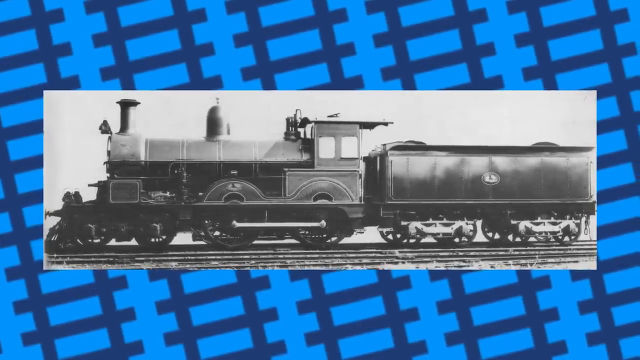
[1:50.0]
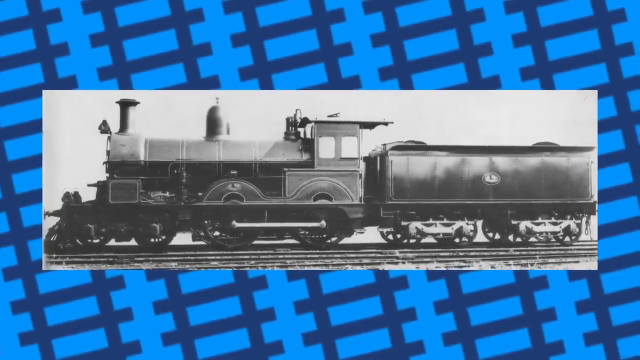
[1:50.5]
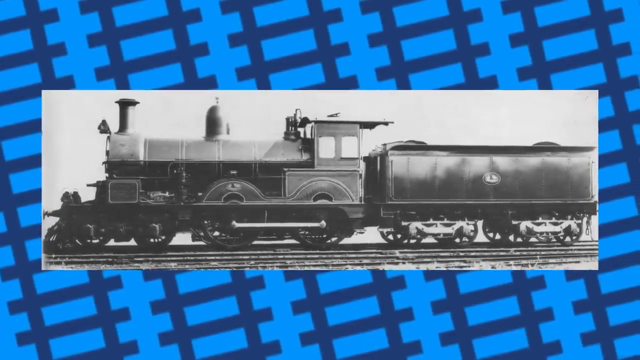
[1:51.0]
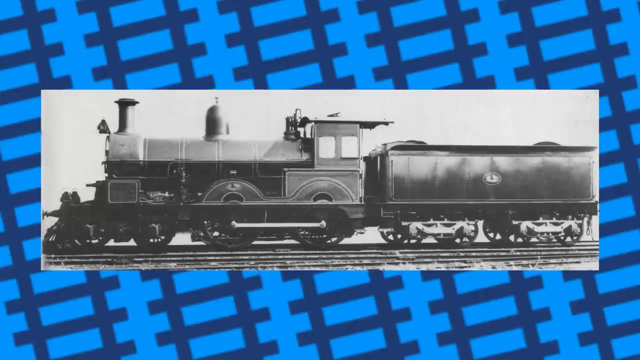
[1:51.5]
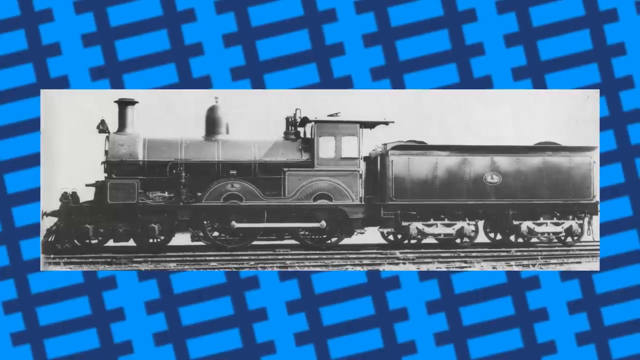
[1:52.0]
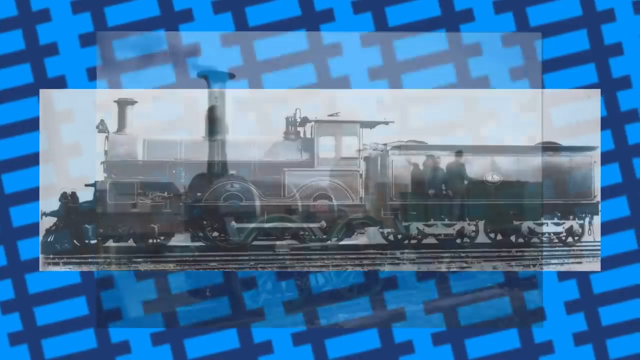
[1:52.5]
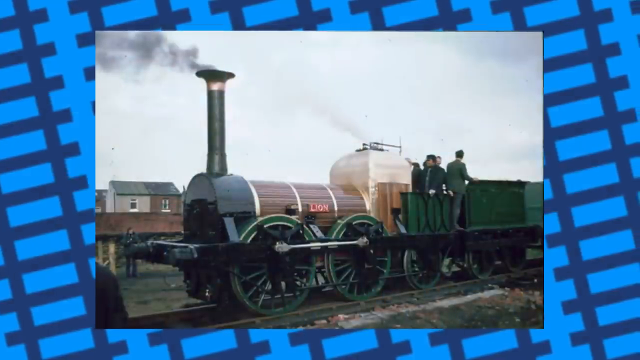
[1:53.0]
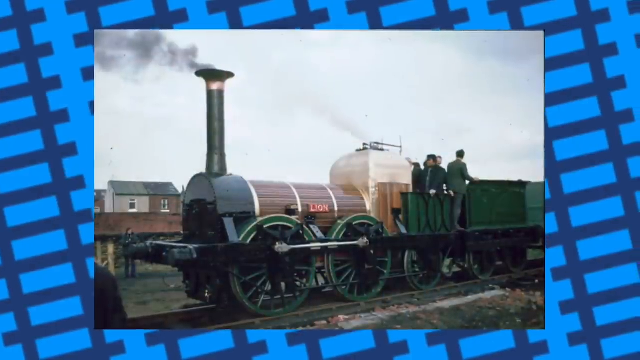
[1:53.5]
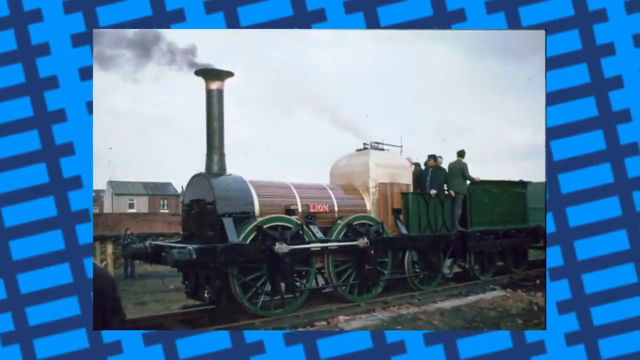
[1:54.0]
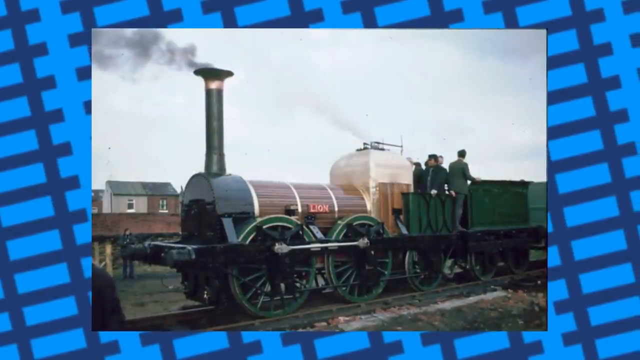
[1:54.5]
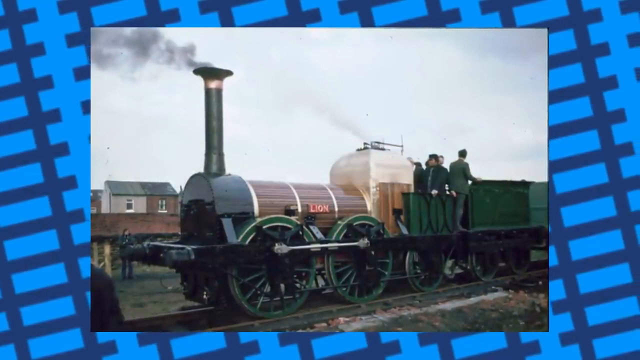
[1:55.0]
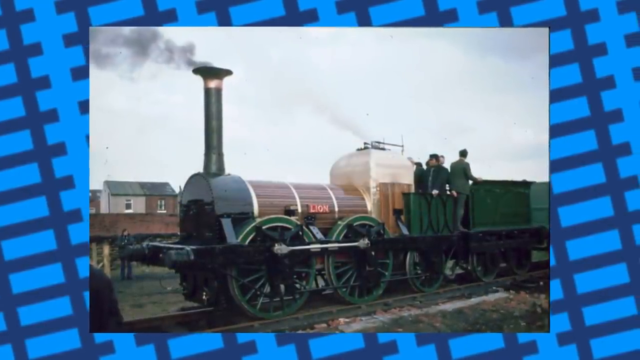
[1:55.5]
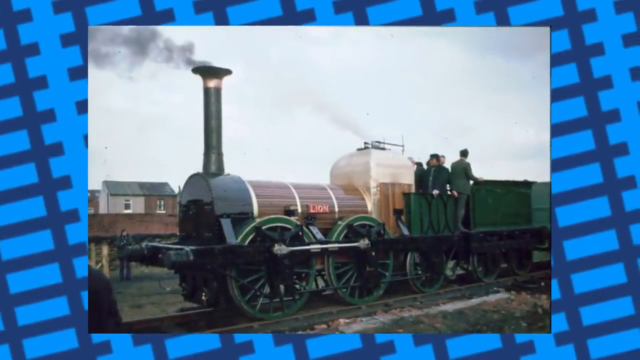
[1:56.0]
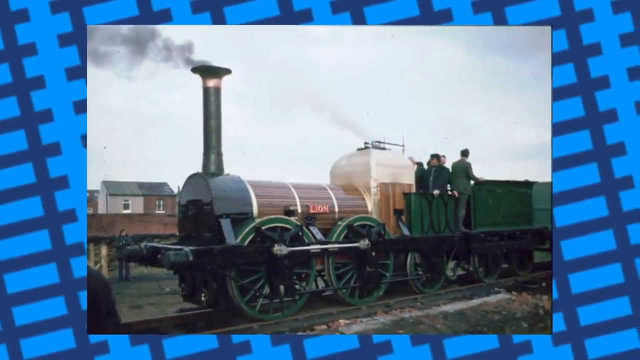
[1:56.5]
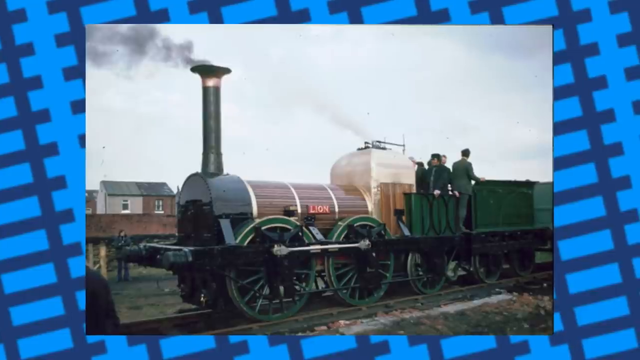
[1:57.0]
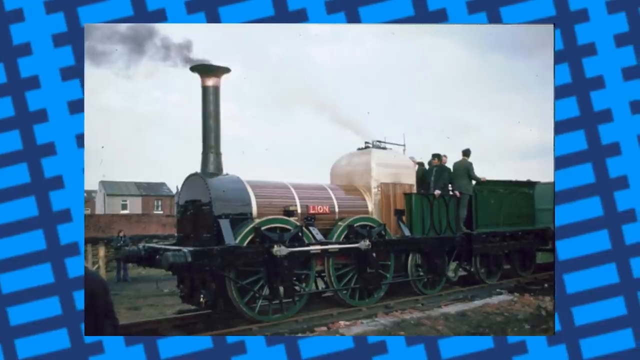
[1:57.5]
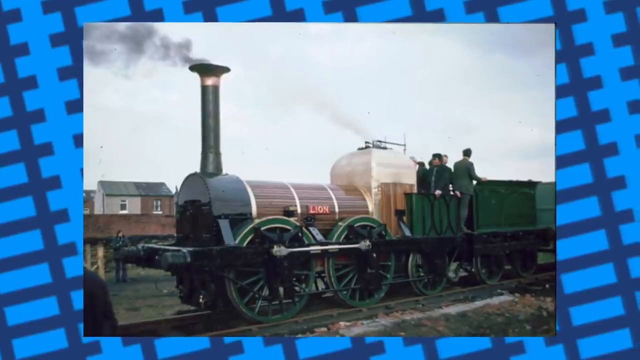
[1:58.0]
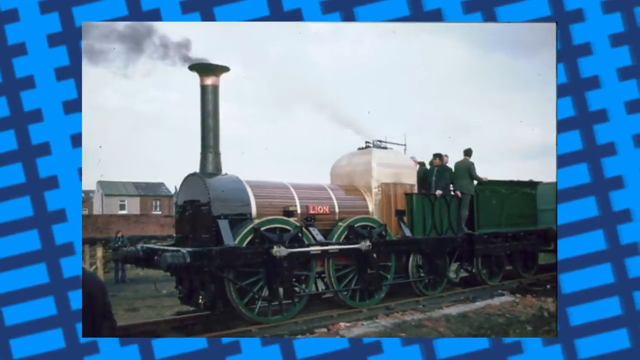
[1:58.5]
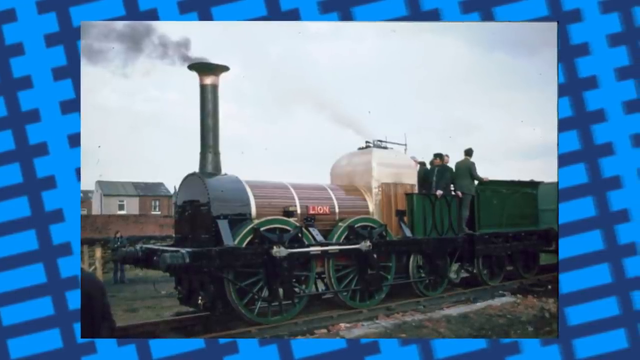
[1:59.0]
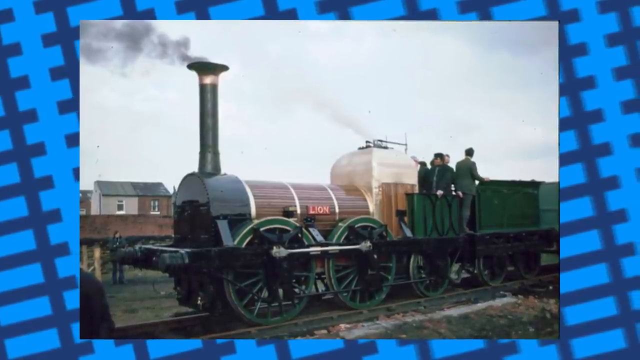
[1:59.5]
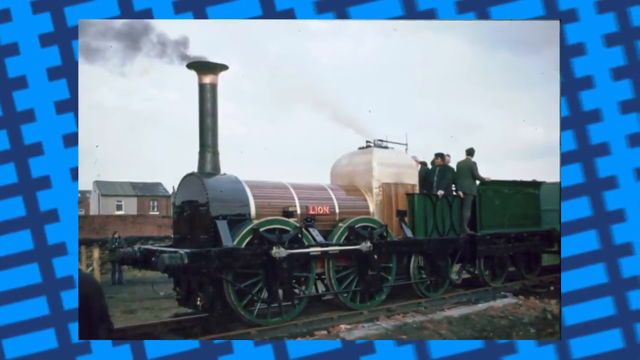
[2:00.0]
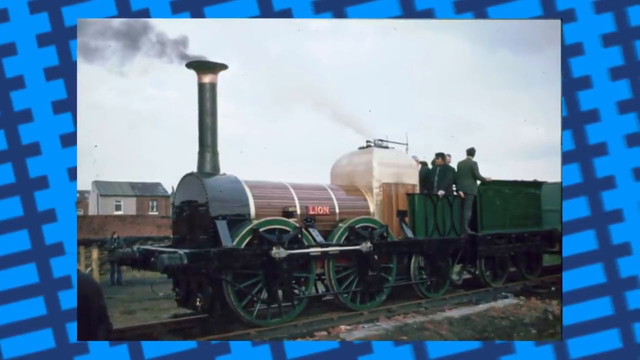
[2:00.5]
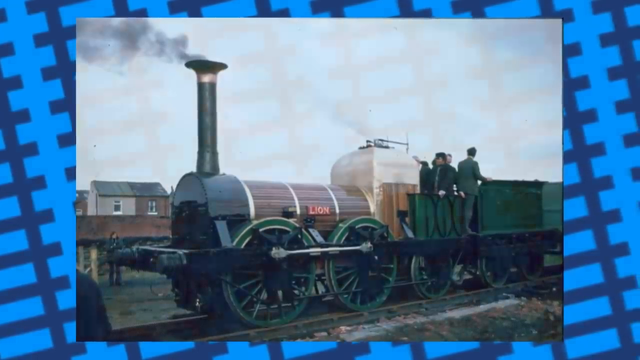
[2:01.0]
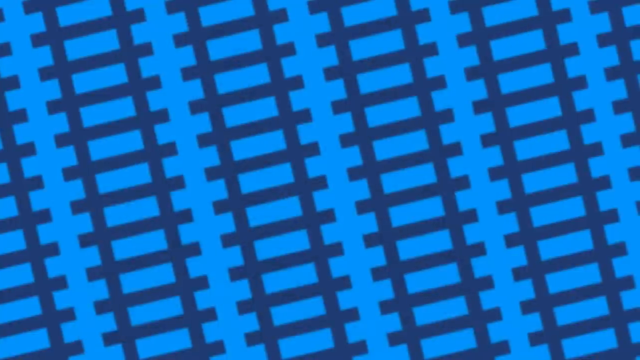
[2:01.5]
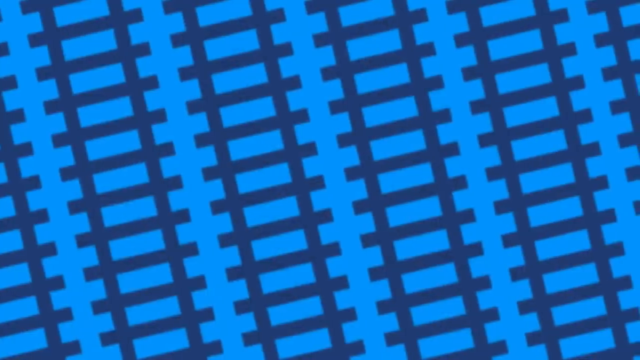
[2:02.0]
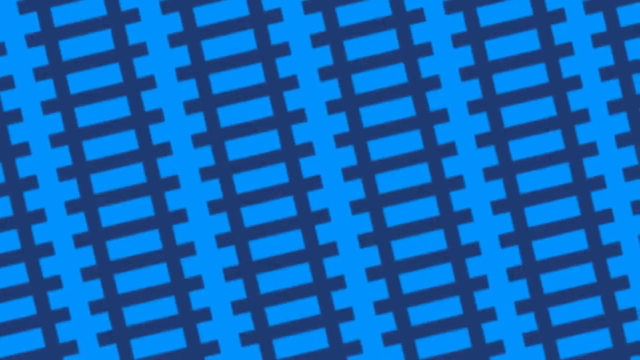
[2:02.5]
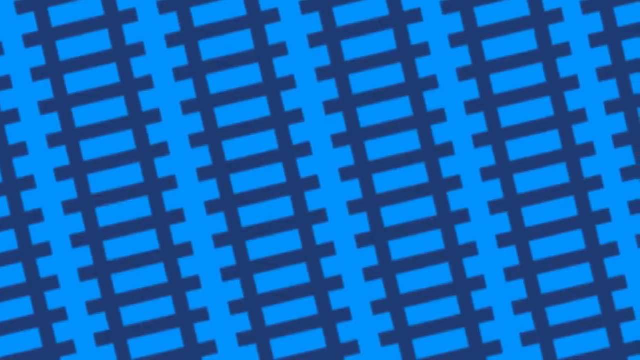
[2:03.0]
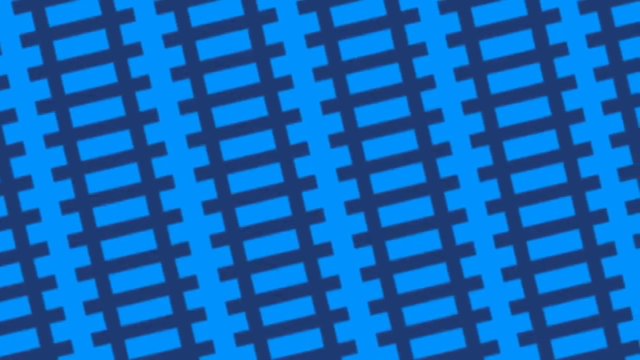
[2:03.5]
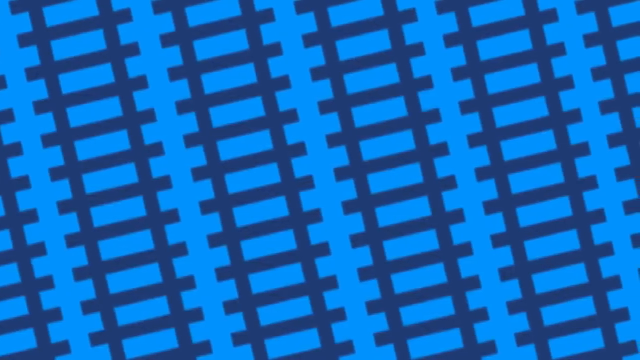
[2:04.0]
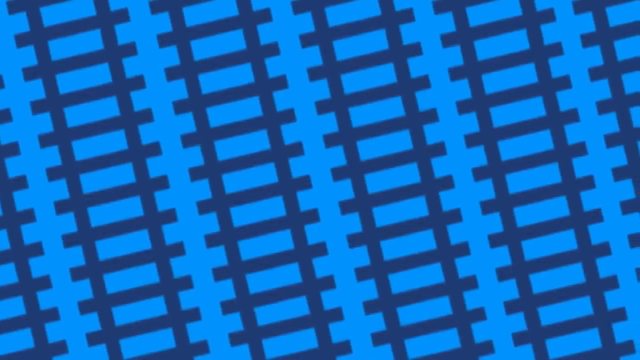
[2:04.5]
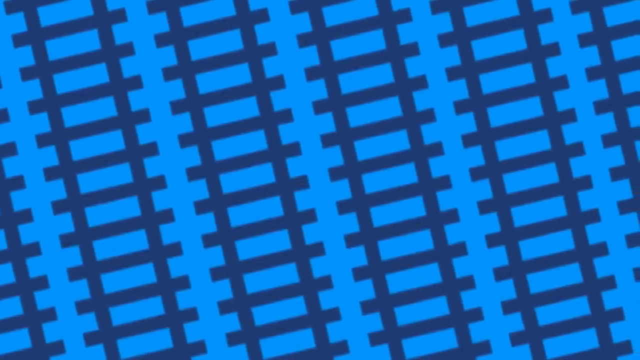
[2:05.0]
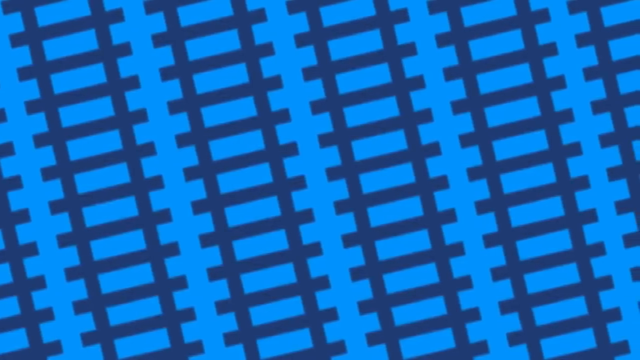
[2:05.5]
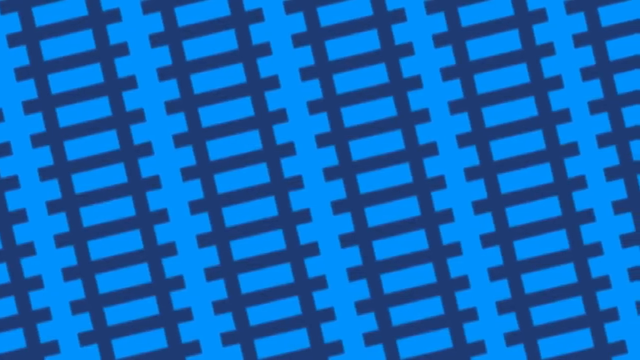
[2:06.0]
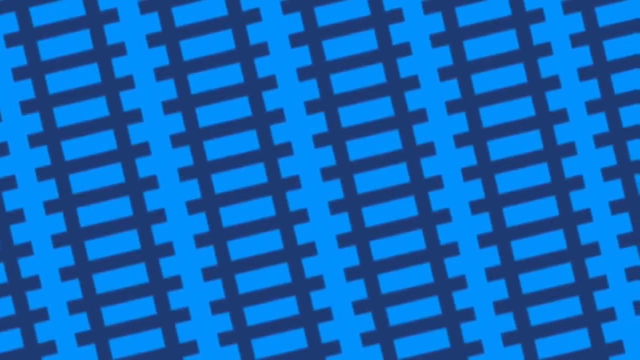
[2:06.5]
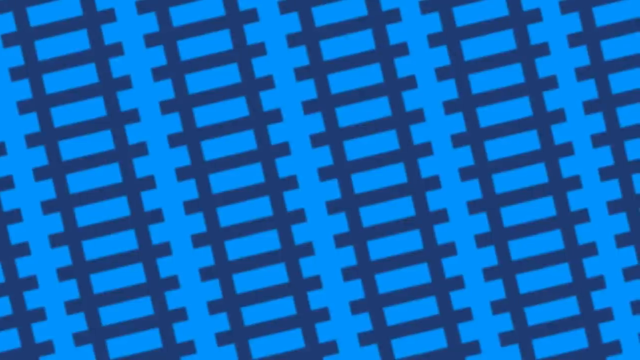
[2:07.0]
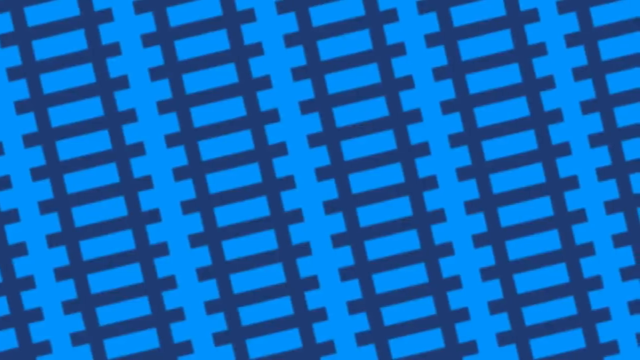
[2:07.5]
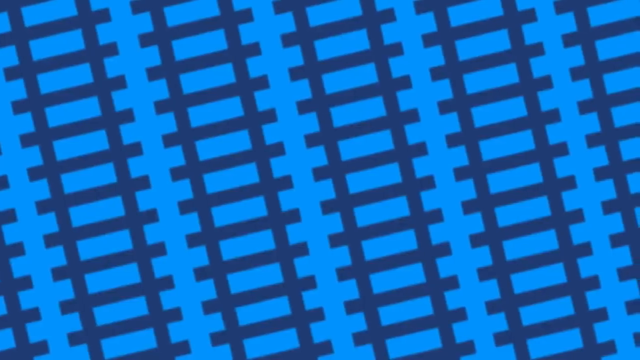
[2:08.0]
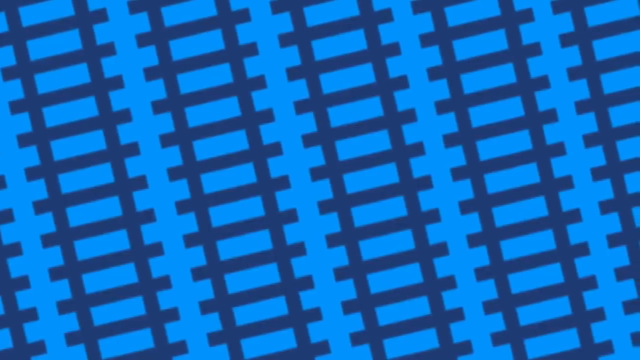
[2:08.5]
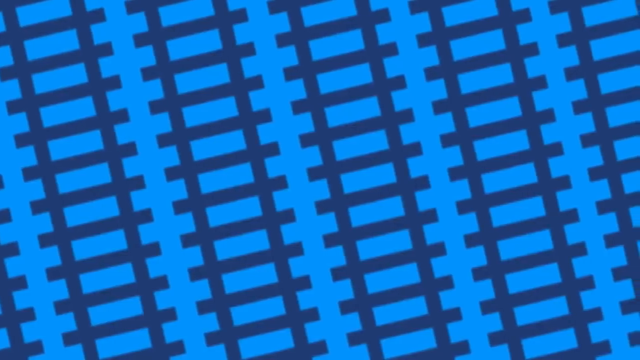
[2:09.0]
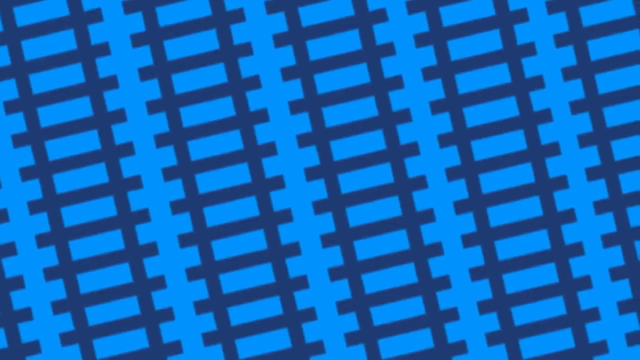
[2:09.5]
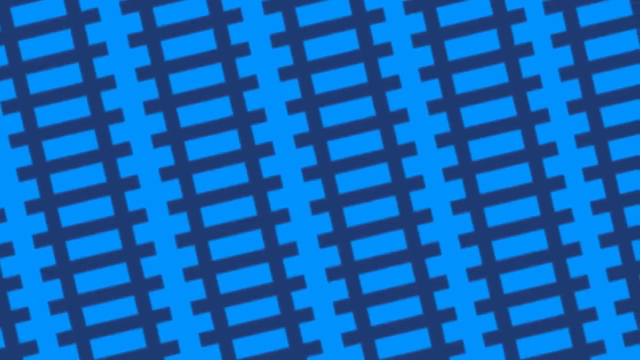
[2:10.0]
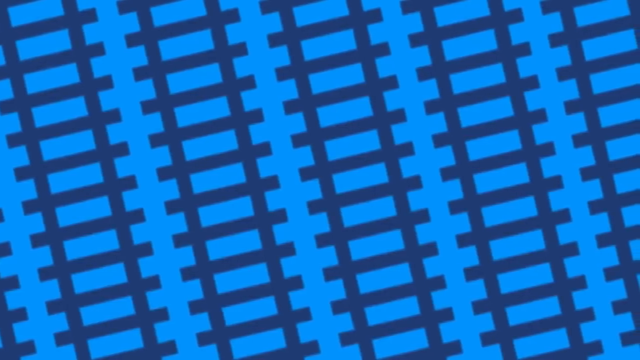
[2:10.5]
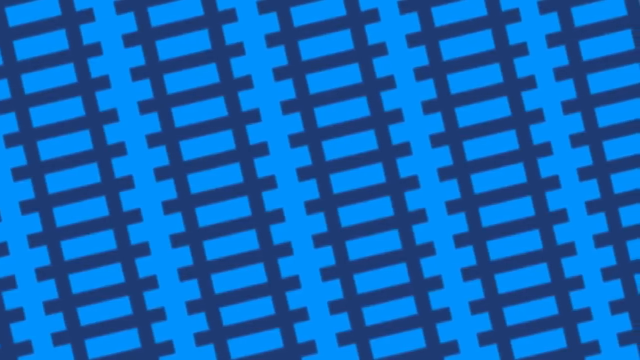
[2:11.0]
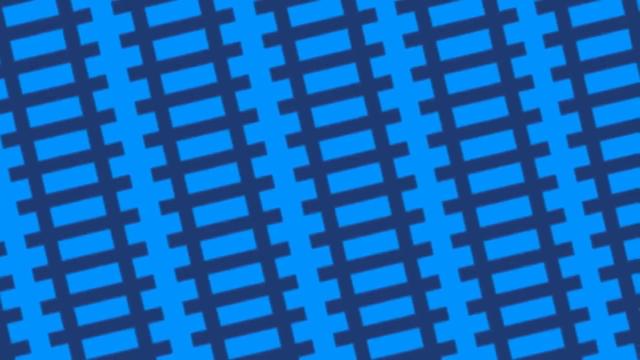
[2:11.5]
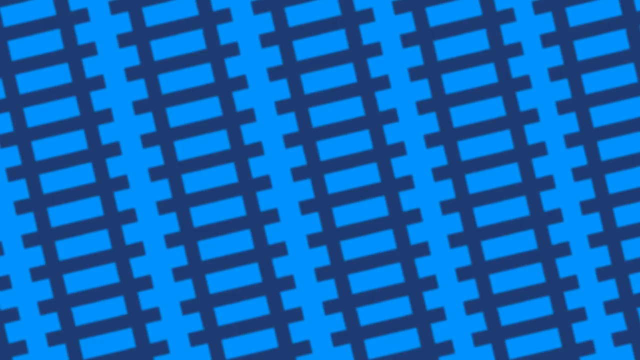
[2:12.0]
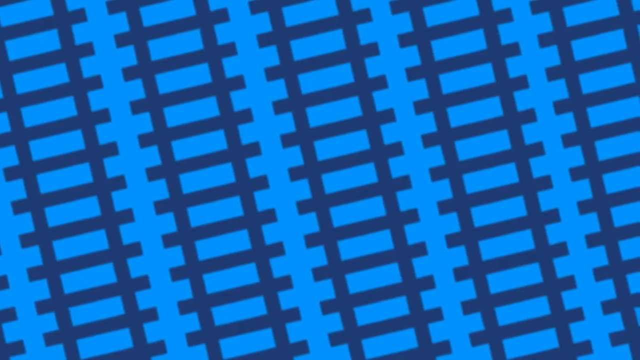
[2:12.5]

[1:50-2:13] The black and white picture of the train is on screen, on the same light blue background with dark blue railroad tracks running diagonally. It switches to another train that is mostly green in color. The first car has what looks like a wood grain on it, and the stack is very tall and black with some smoke coming out. What look to be houses are in the background, and people standing on the train wear green suits. The sky in this picture is overcast. The screen then switches to just the light blue background with the dark blue train tracks, which seems to be the end of the video. Overall, the video shows many different pictures and drawings of trains from various places, some in black and white and some in color.